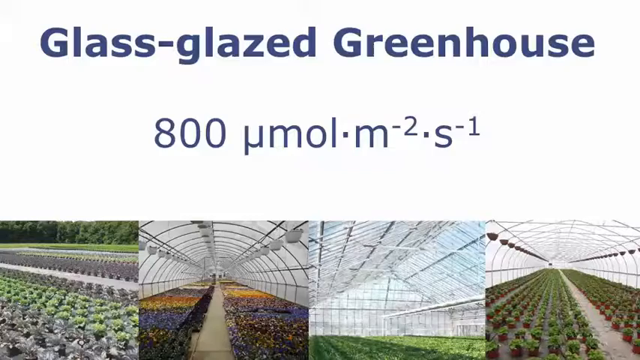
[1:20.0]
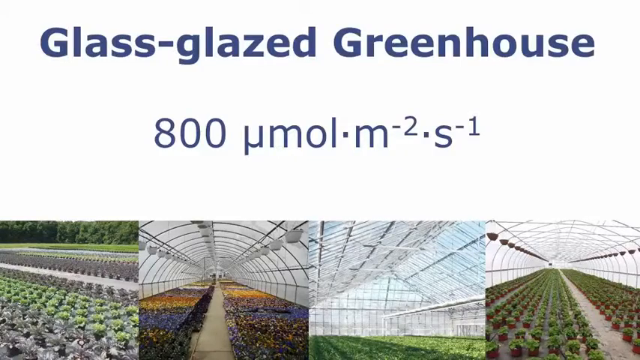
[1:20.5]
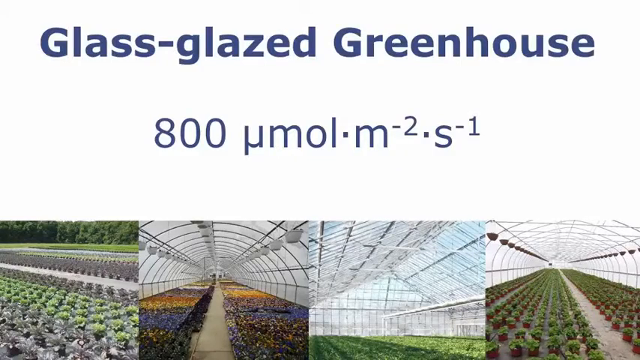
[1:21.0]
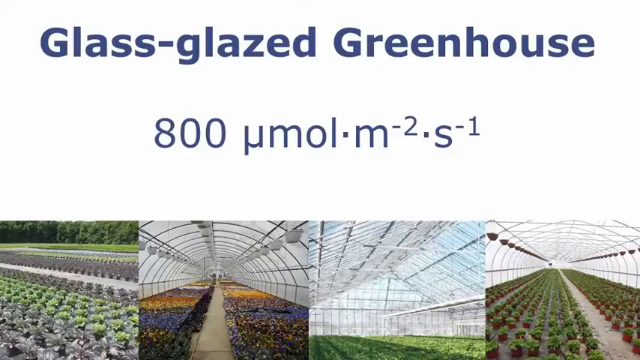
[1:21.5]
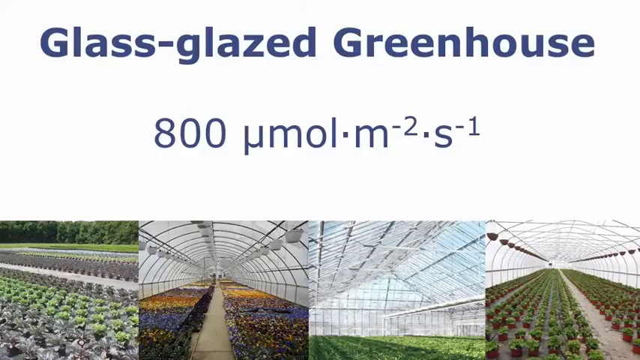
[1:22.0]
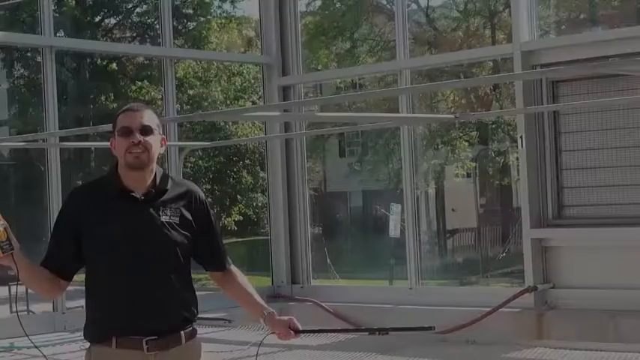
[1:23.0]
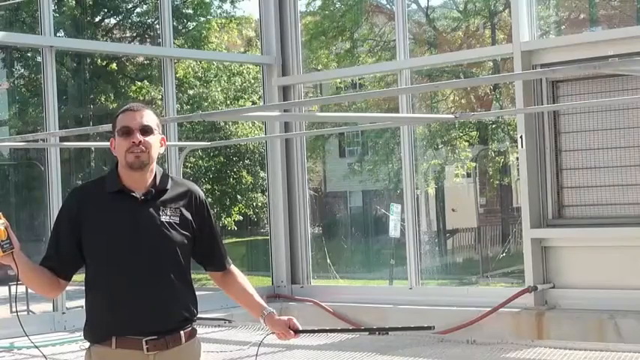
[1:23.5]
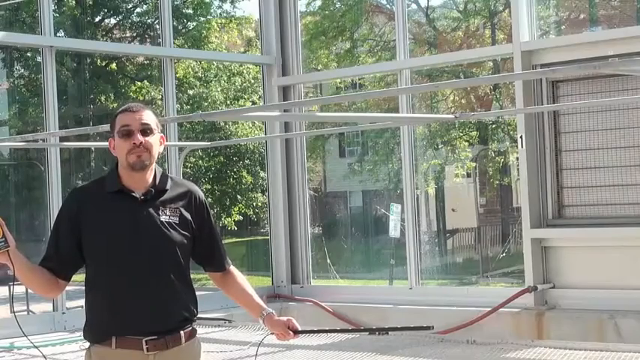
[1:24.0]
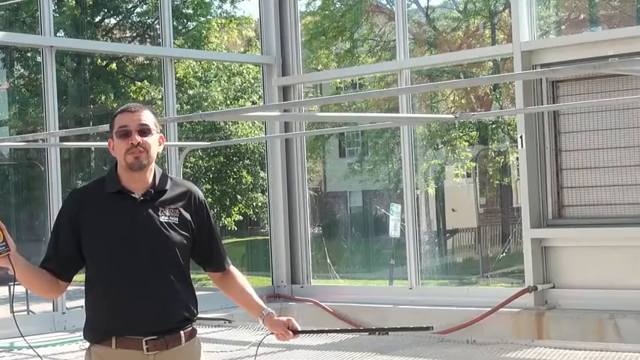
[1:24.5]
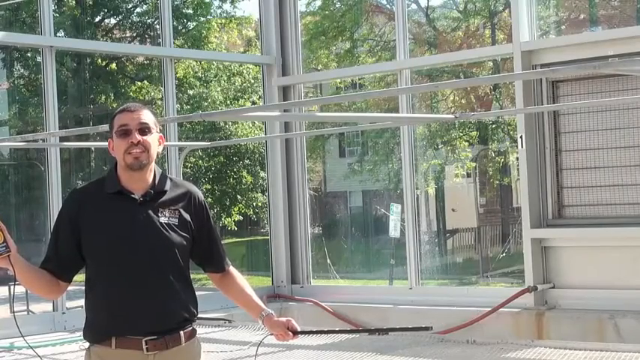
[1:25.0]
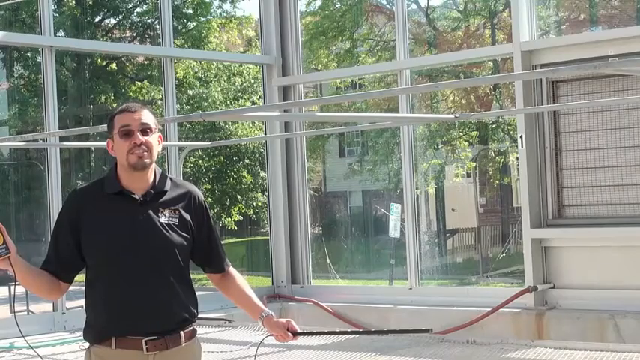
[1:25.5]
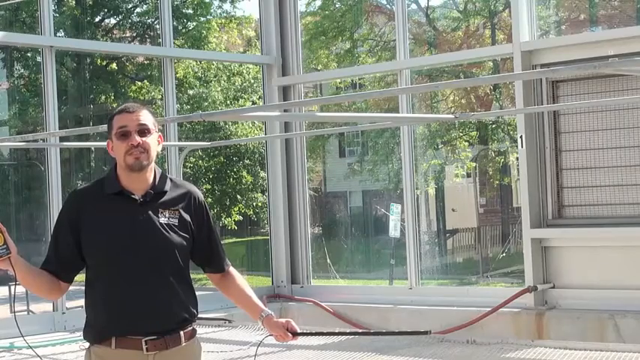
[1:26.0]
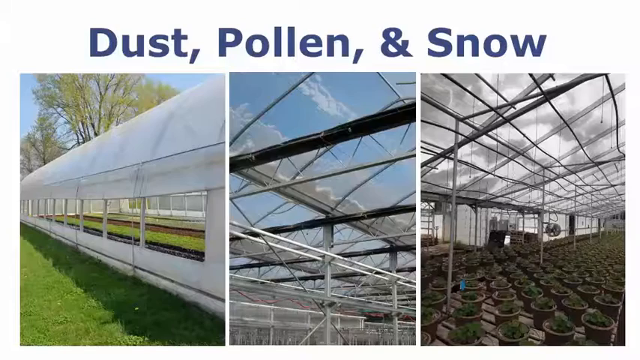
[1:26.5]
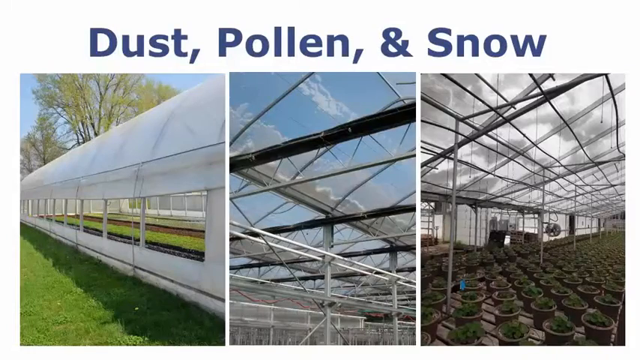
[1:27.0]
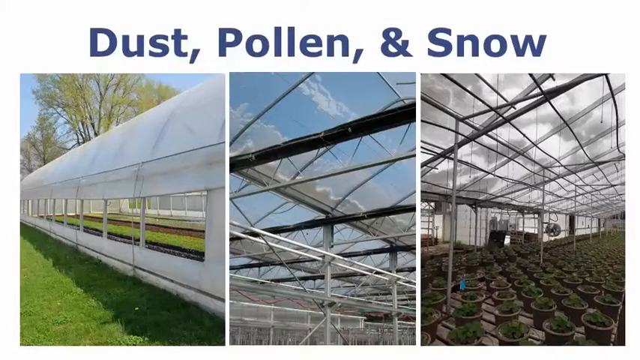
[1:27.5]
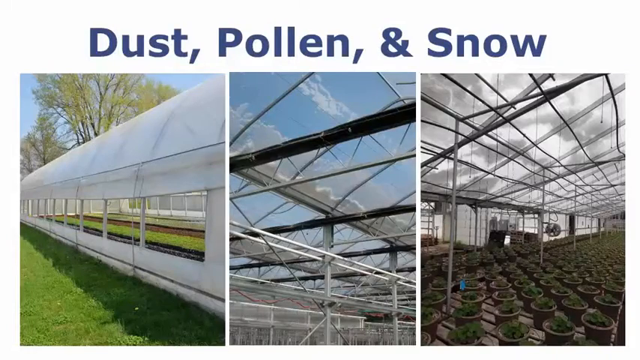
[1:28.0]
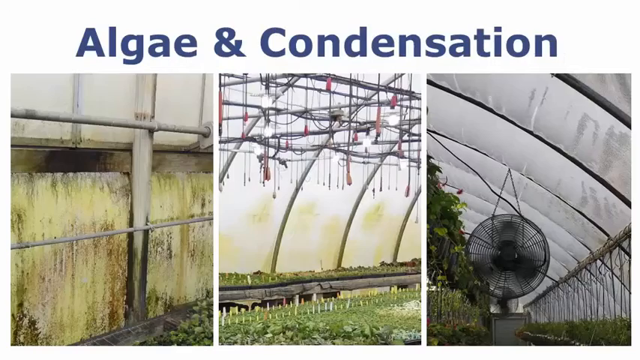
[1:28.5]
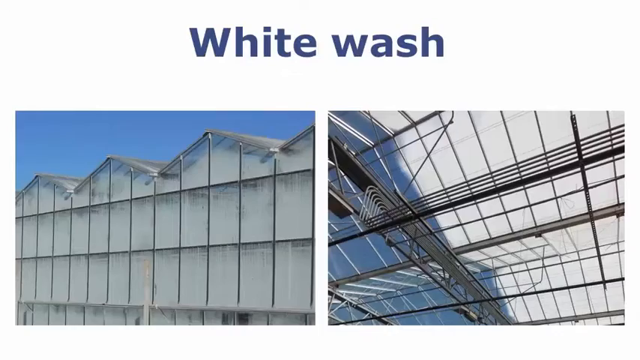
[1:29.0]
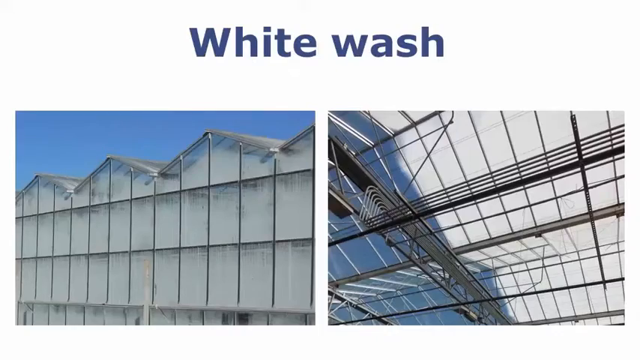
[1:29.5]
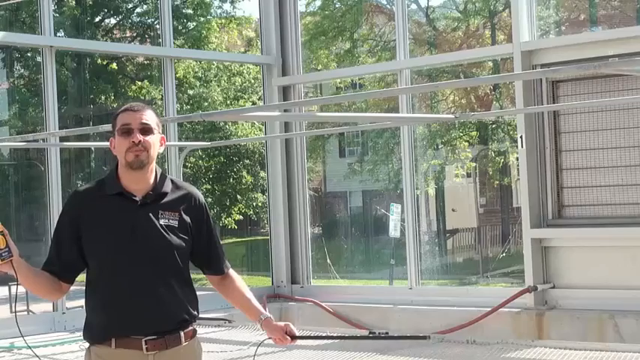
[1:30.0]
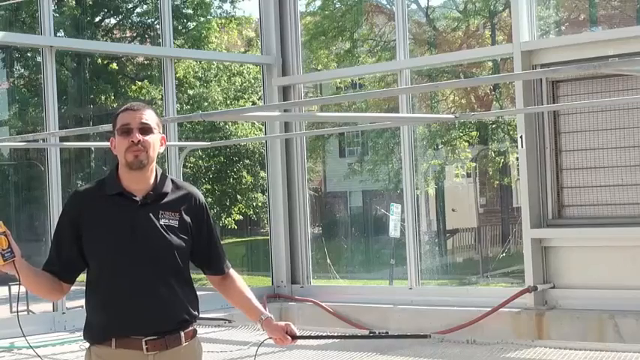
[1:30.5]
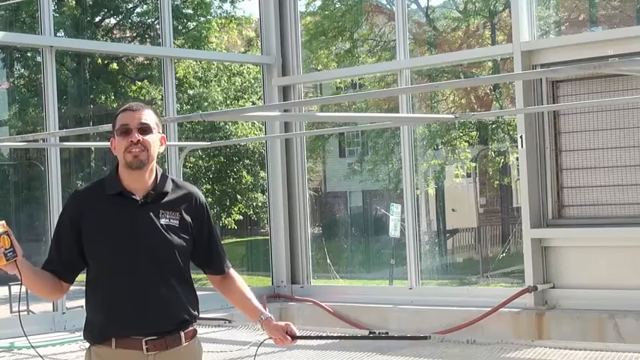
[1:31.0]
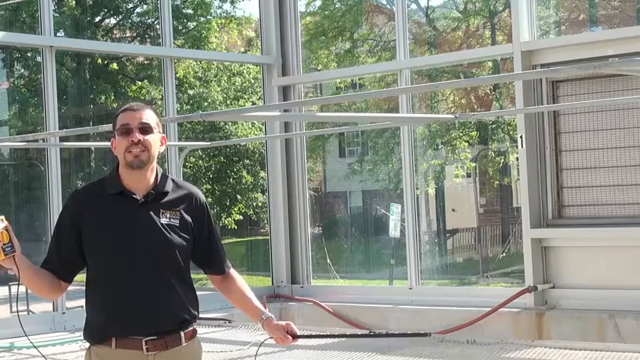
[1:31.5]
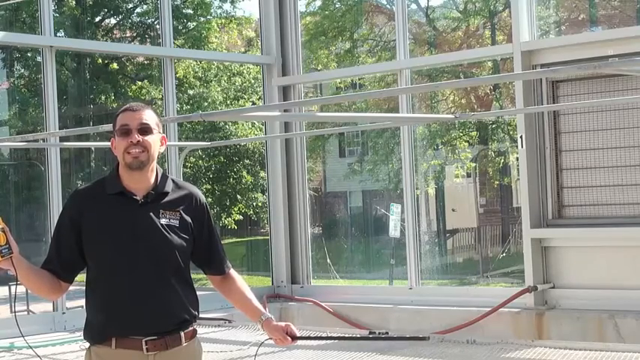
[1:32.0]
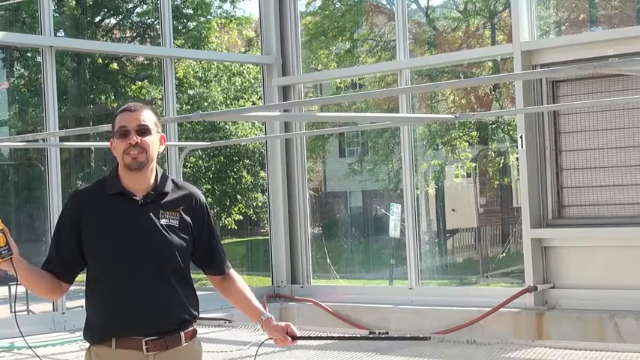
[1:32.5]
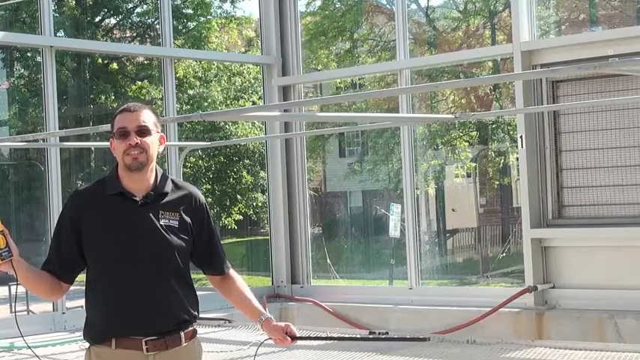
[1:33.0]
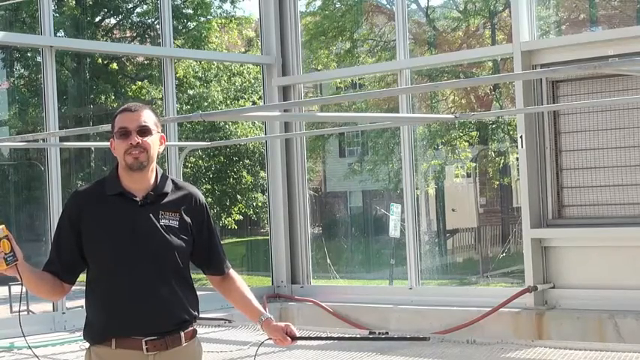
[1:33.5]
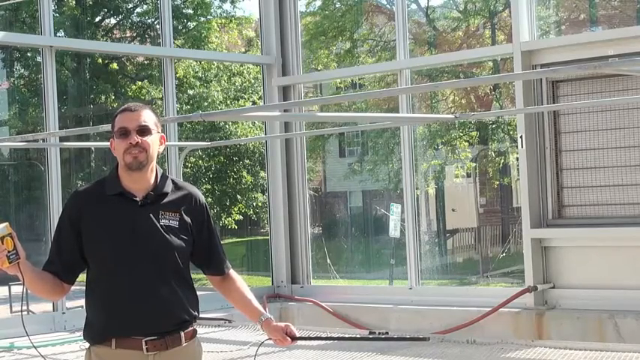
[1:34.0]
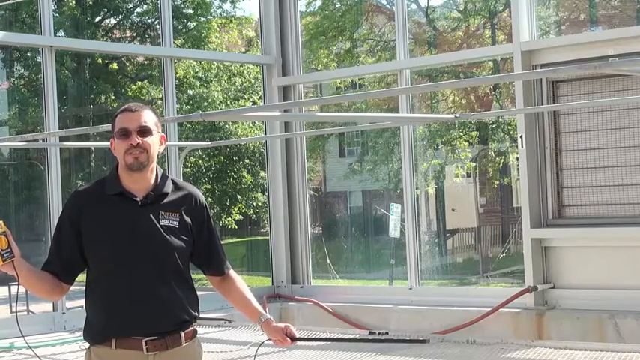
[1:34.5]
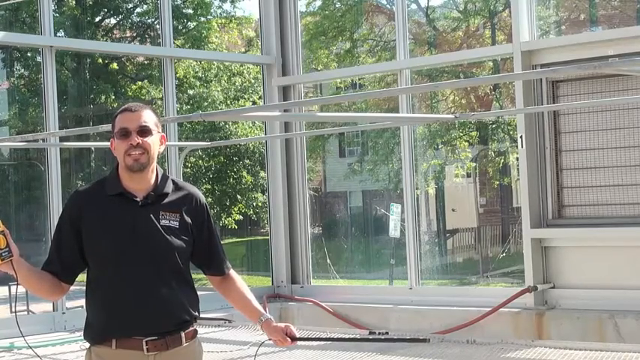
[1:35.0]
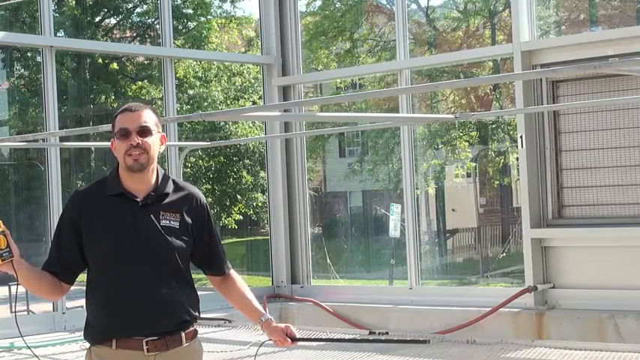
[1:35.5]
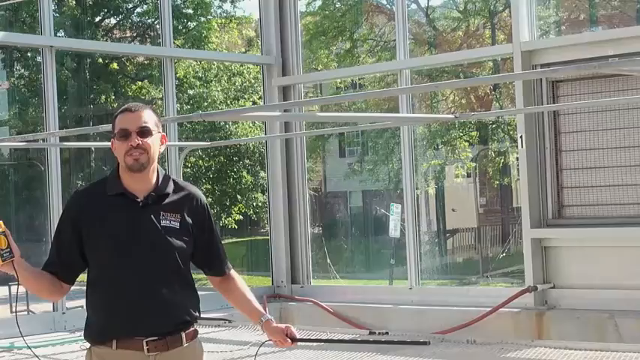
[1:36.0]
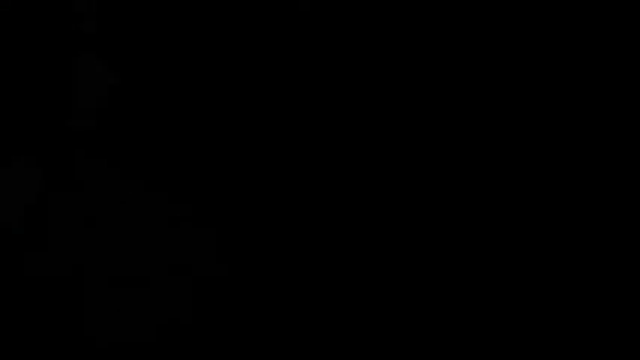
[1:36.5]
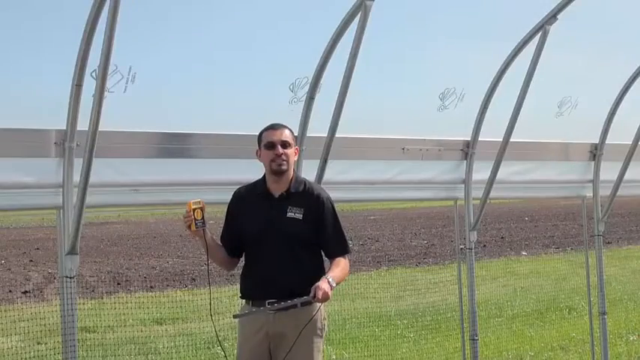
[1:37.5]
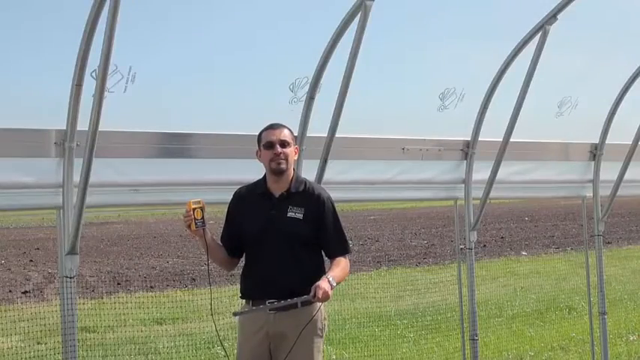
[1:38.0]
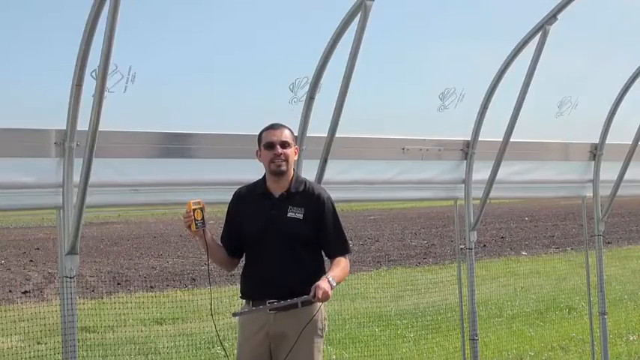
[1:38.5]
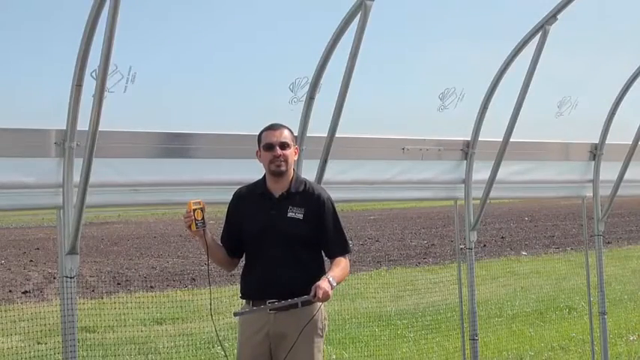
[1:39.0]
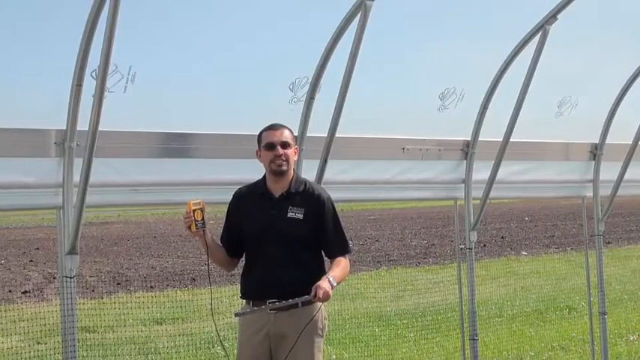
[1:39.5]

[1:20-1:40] A slide has a square white background section up top with blue lettering reading "glass-glazed greenhouse," and blue lettering underneath reading "800" with an unreadable equation. Four photographs are at the bottom, from left to right: an outdoor photo of green and gray plants in a row with green trees and green grass in the background; yellow, orange, purple, blue and white plants in two rows with a gray path in the middle under a white rounded roof; a green patch at the bottom under a triangular roof of glass panes; and green plants in a row with a gray path slightly to the right under a rounded white roof. Next, a white man on the left wears a black collared short-sleeved shirt with a white patch on the left chest, a brown belt and cream-colored pants. He has short brown hair, a brown goatee and brown sunglasses. In his right hand he has a yellow meter with a black cord attached, in his left hand a black wand, and he wears a silver wristwatch. He is in a glass-paned room with grey frames, with green trees visible outside, and talks to the camera. The next slide has a white top section with blue lettering reading "dust, pollen, and snow" and three photographs underneath: on the left, green grass at the bottom, a white dome with green trees behind it and a row of green inside the dome; next, a glass roof with black and silver metal frames and blue sky and white clouds above; and another white and black rimmed roof with white clouds visible and a row of brown plants with green leaves inside.